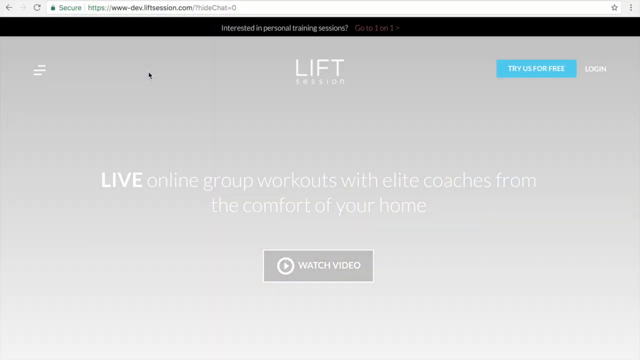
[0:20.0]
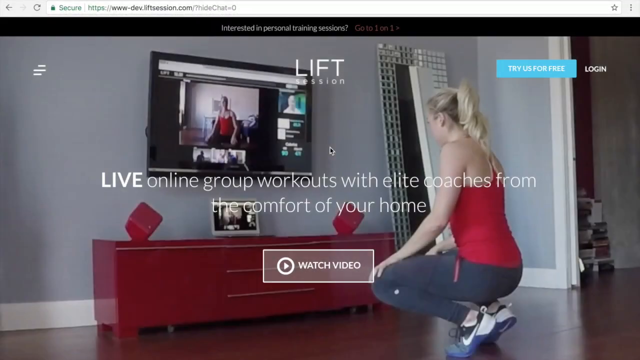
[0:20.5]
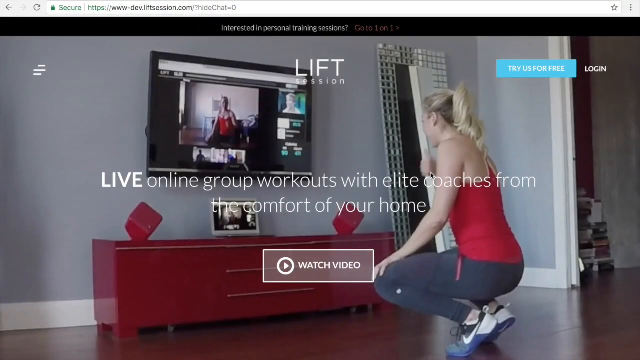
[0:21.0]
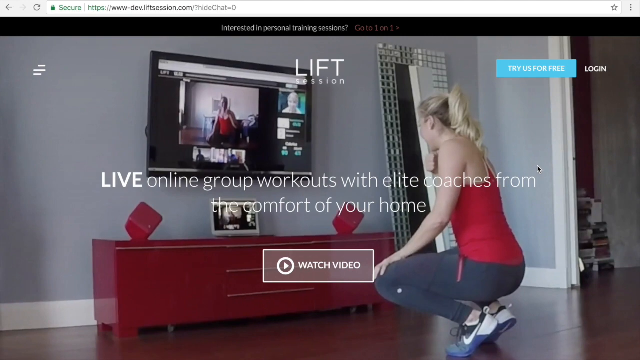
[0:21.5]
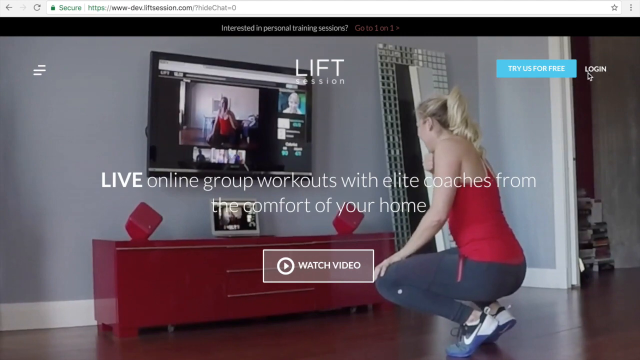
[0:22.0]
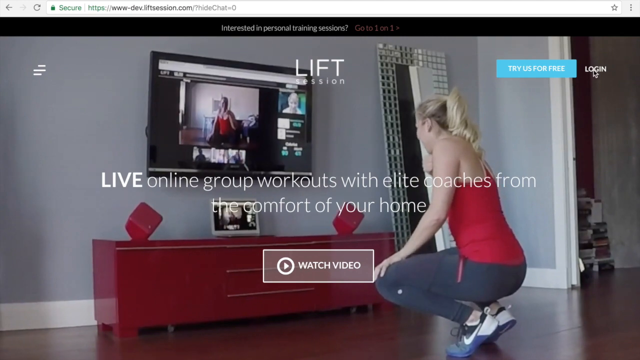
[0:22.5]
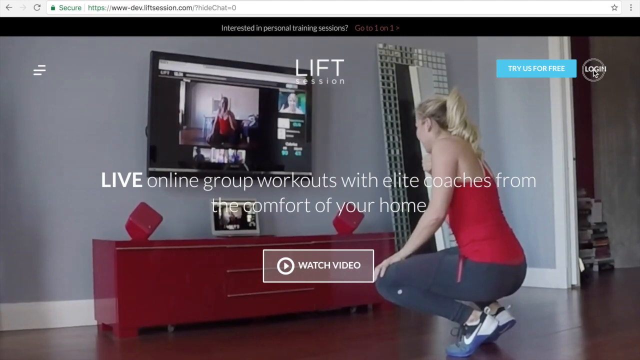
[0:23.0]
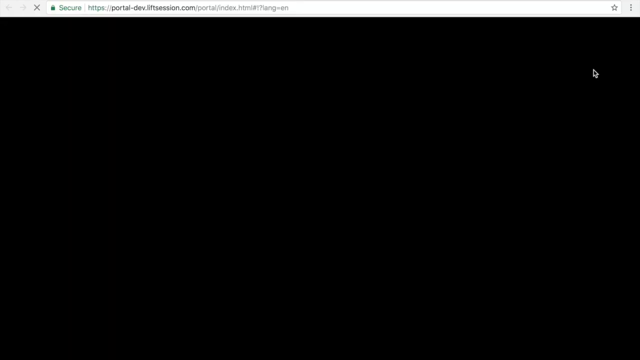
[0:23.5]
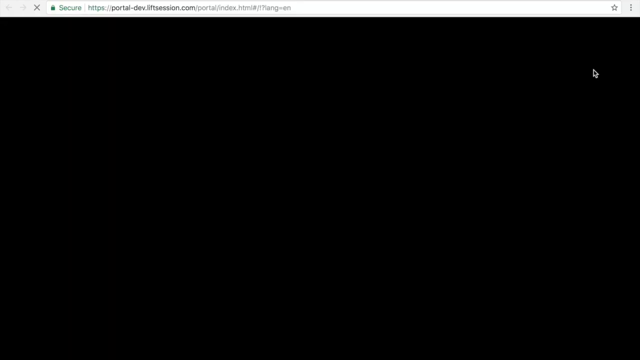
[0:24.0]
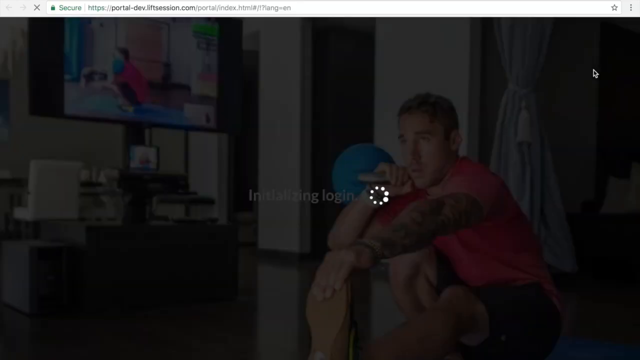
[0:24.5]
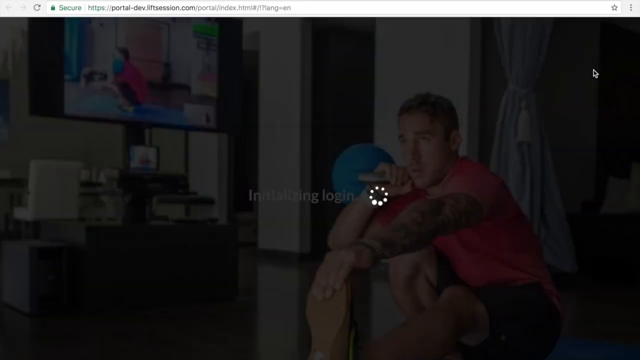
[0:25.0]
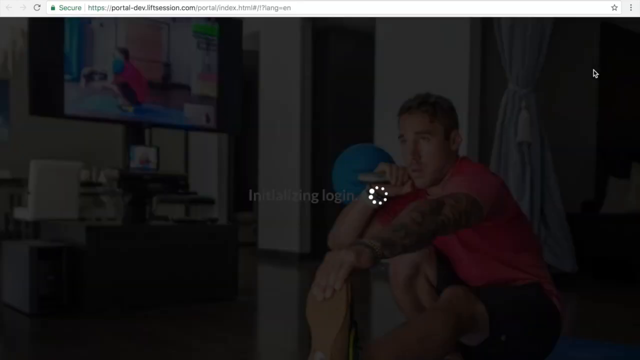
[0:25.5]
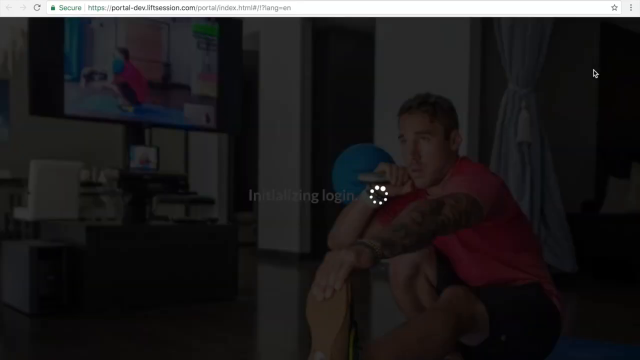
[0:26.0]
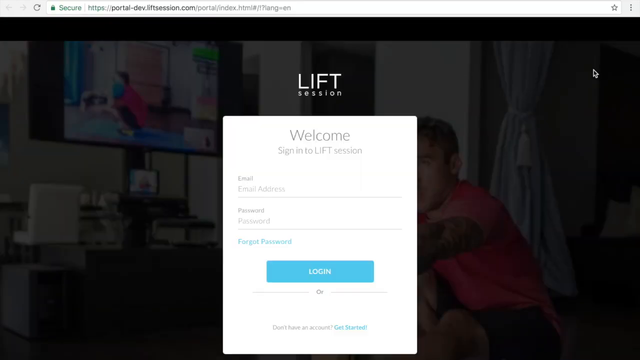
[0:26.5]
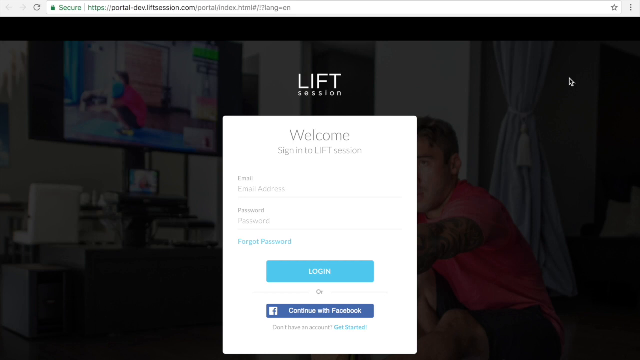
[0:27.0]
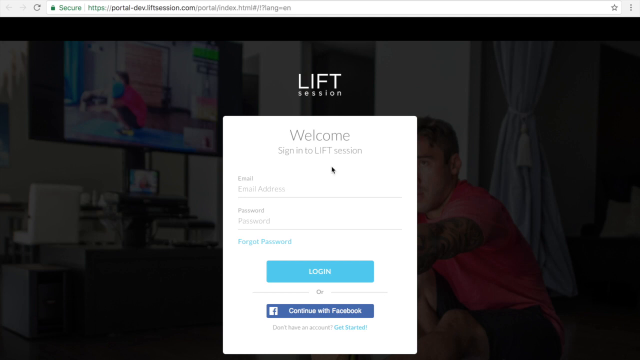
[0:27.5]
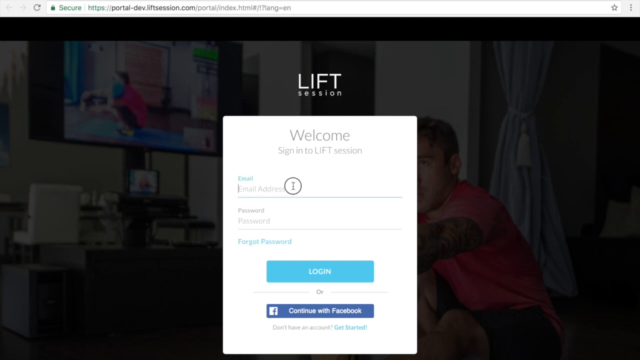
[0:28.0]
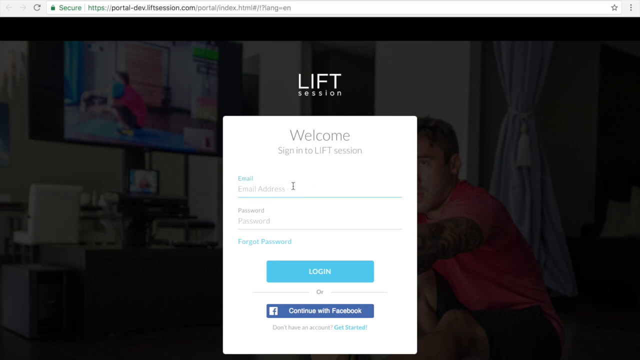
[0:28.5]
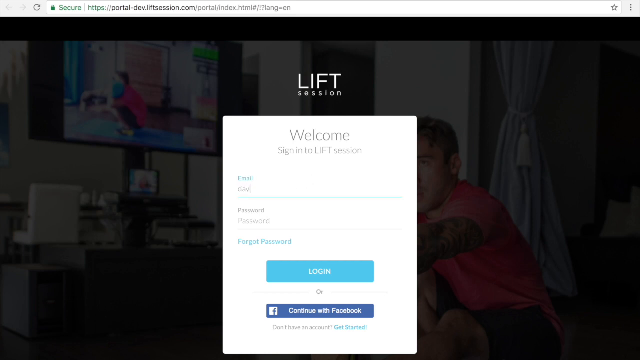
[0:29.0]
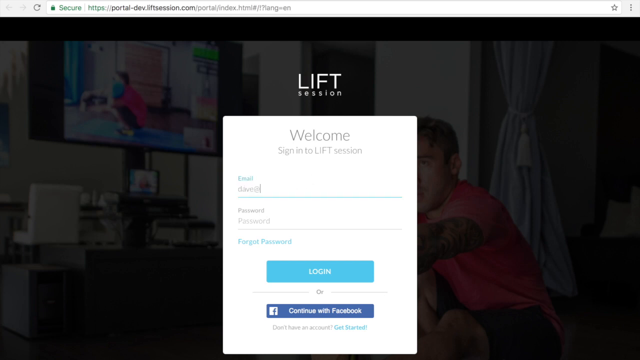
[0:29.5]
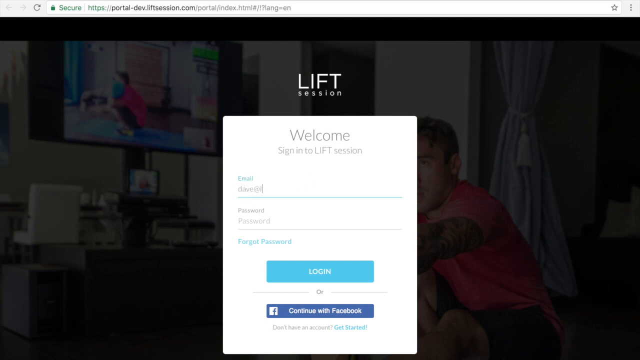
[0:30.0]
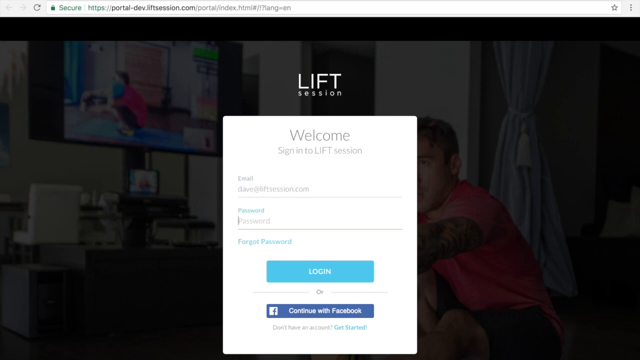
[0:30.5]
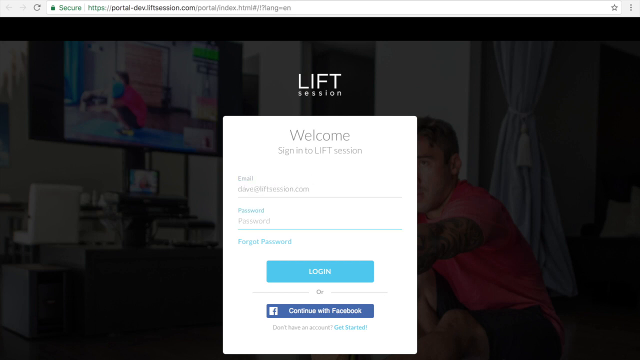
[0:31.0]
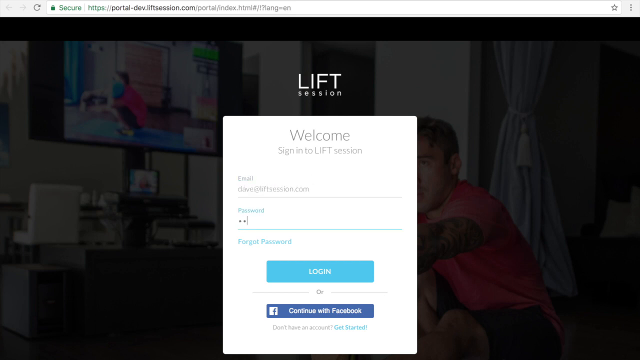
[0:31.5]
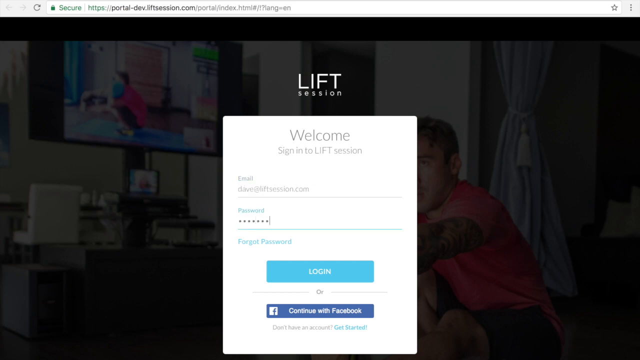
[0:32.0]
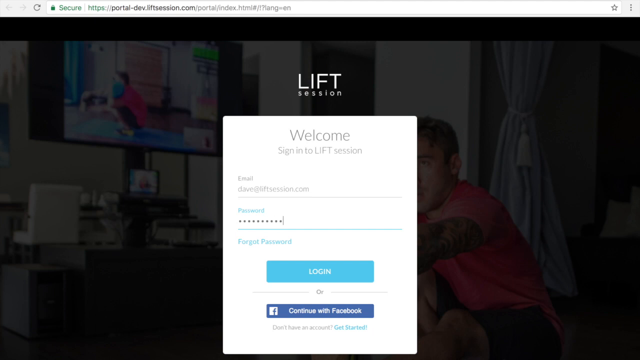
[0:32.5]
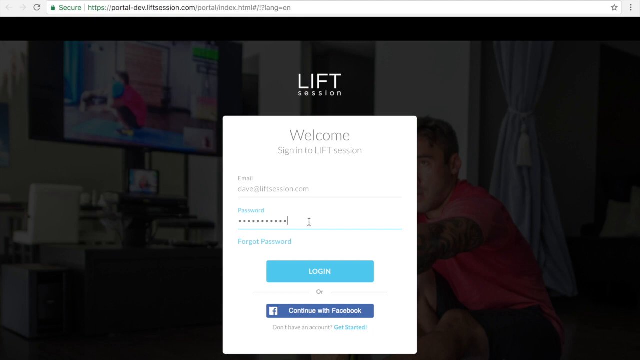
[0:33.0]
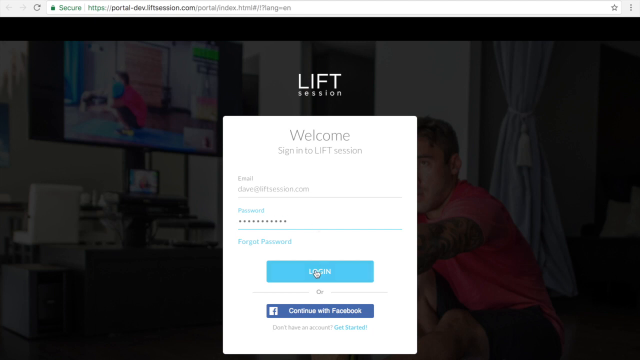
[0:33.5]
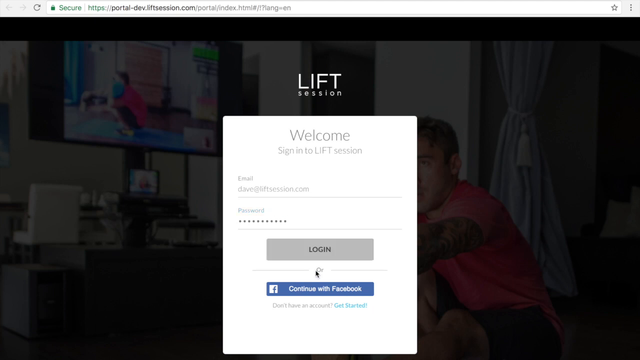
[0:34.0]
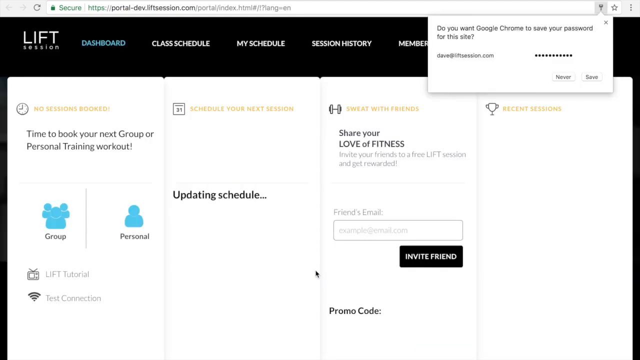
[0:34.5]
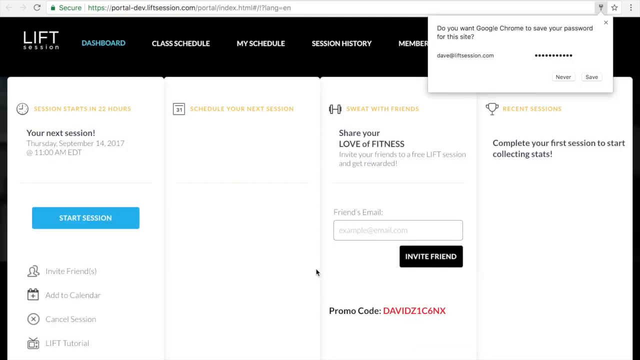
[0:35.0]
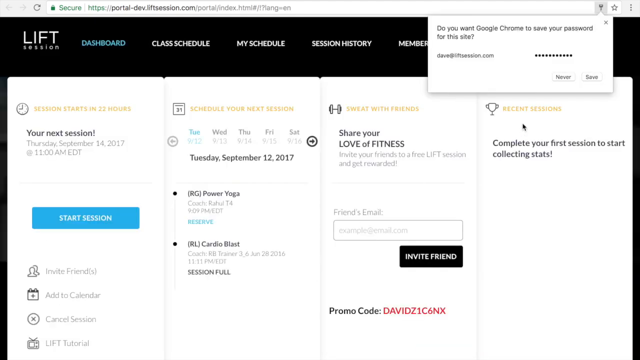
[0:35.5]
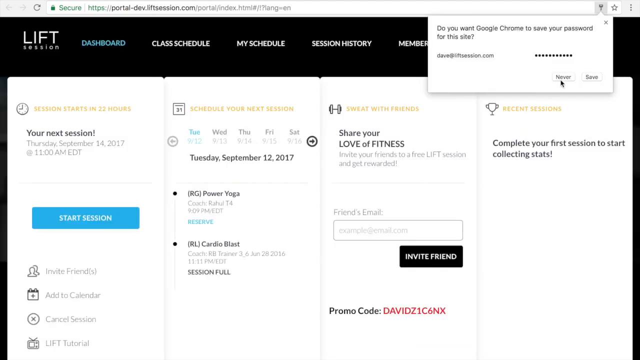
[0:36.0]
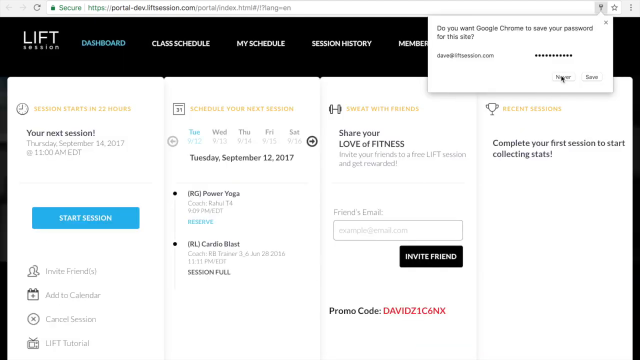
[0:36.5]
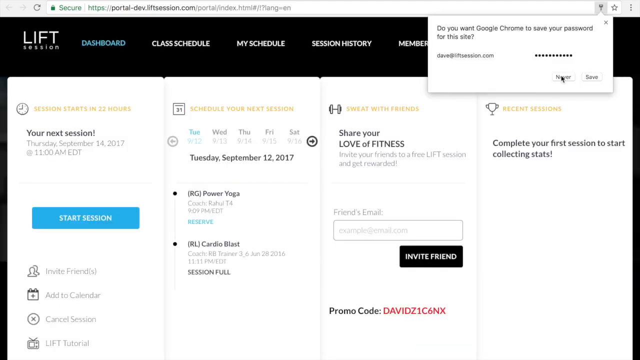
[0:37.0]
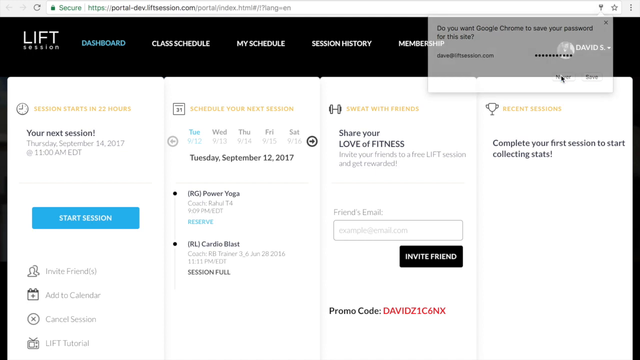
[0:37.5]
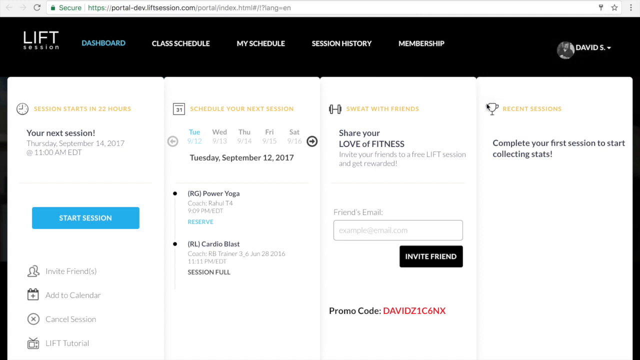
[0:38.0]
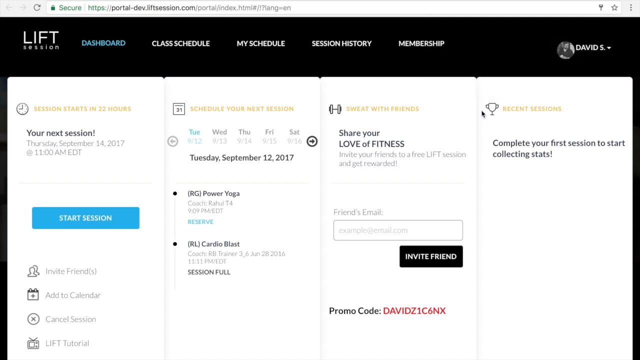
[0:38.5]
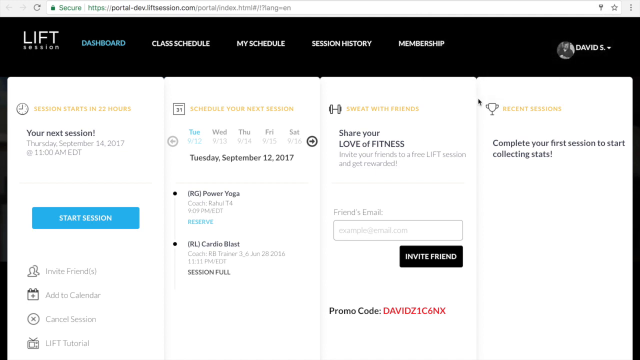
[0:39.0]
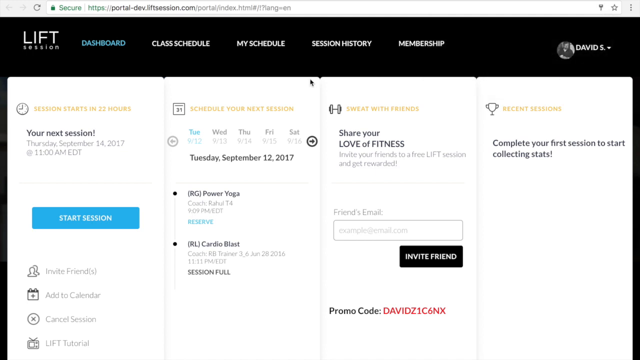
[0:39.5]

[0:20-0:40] A web page with a gray background is shown. A black bar at the top says "interested in personal training sessions" in white text, and at the top of the page it says "LIFT Sessions." In the upper right is a blue button reading "try us for free" with "login" text to its right. In the middle it says "LIVE online group workouts with elite coaches from the comfort of your home," and at the bottom is a gray "watch video" button with a play symbol on its left side. The page's background changes to a woman with blonde hair, a red shirt and grey leggings, facing away and toward the left side of the video, in a comfortable room with a red desk and a TV hanging on the wall on the left. The cursor moves up to the right side to hover over the Login text. In the background the woman is kneeling with her right hand under her chin. The video fades to black as the cursor clicks Login, then fades back in to a darkened background showing a man facing left in a red shirt, holding a blue weight in his right arm with his left arm stretched out before him as he kneels in a fancy-looking apartment. In the middle, grey text reads "Initializing login..." beside a spinning loading symbol. Next, white text at the top middle reads "LIFT session," and beneath it a pop-up says "Welcome" and, in grey text, "Sign into LIFT Session." Below are two fields for email and password, a blue text line reading "Forgot Password?", a teal button labelled "Login," and beneath it a blue button labelled "Continue with Facebook." The cursor moves down and left to click the email field and enters david@liftsessions.com, then moves to the password field and enters an eleven-digit password before clicking the Login button. The screen changes to show a black top area with tabs labelled "Dashboard," "Class Schedule," "Session History" and "Membership," and a white bottom half. The cursor moves up to the right to close a popup asking whether Google can save the password, then is dragged to the left side of the video.